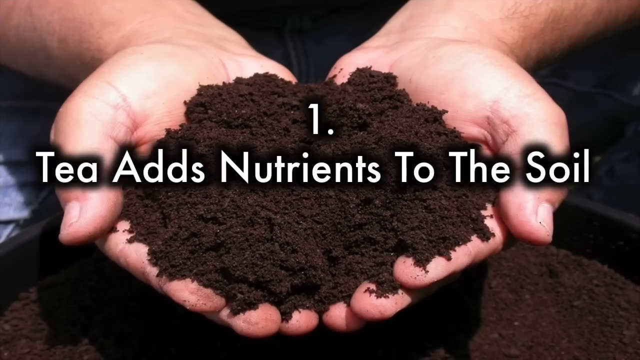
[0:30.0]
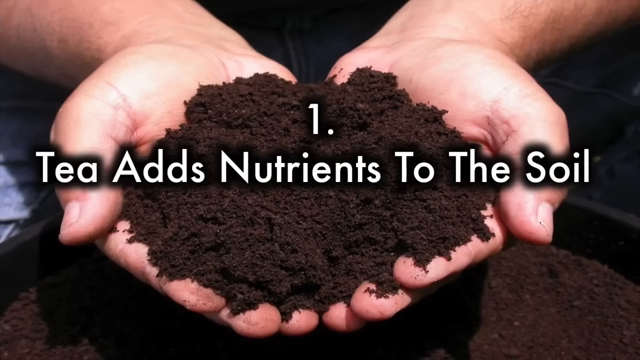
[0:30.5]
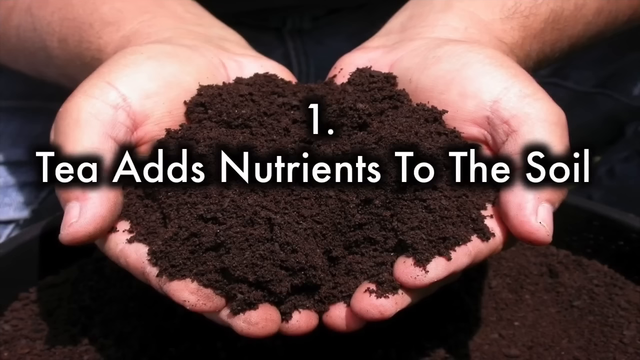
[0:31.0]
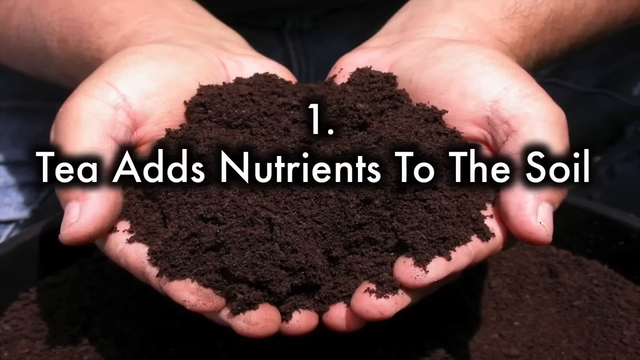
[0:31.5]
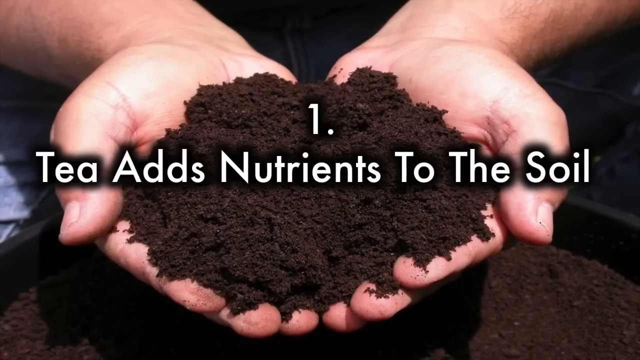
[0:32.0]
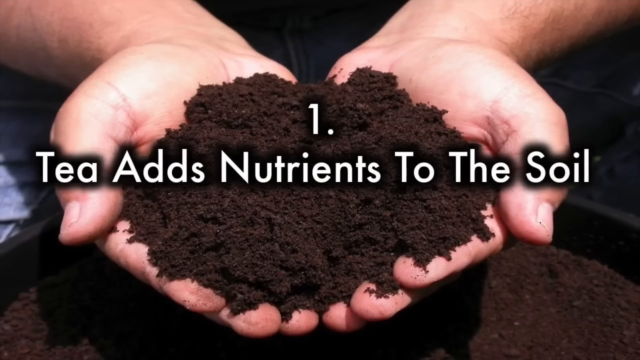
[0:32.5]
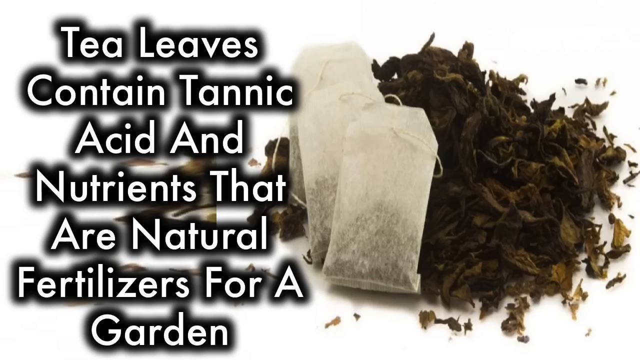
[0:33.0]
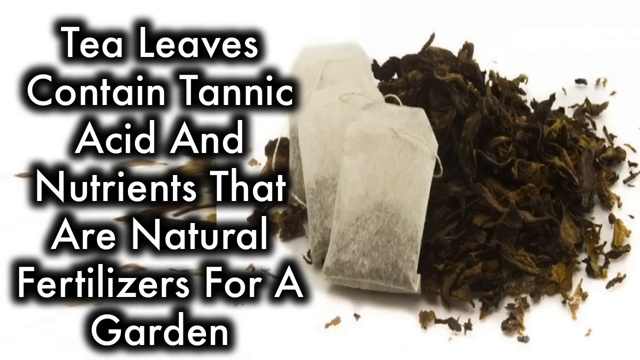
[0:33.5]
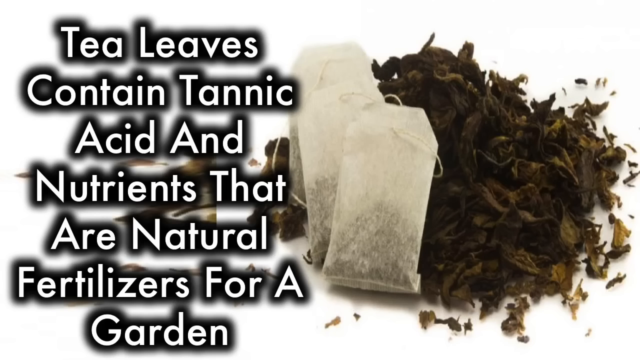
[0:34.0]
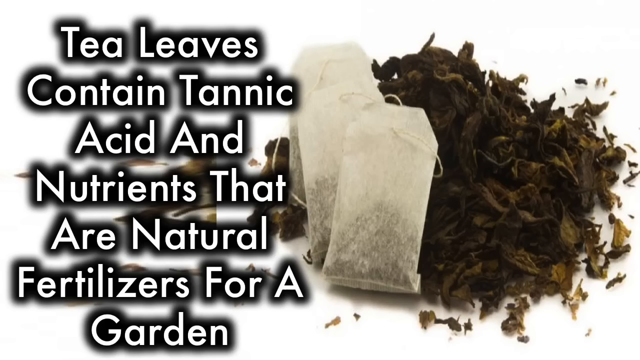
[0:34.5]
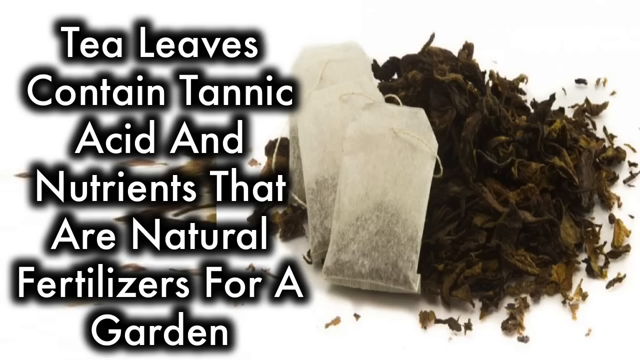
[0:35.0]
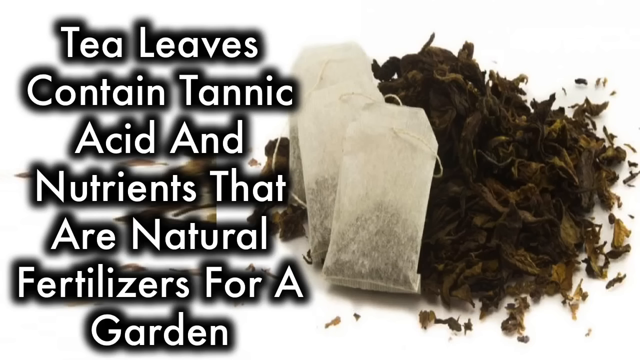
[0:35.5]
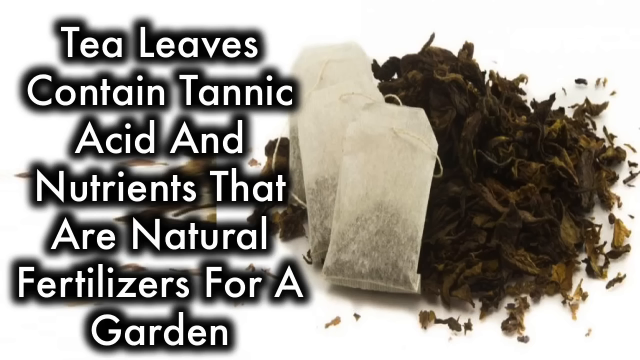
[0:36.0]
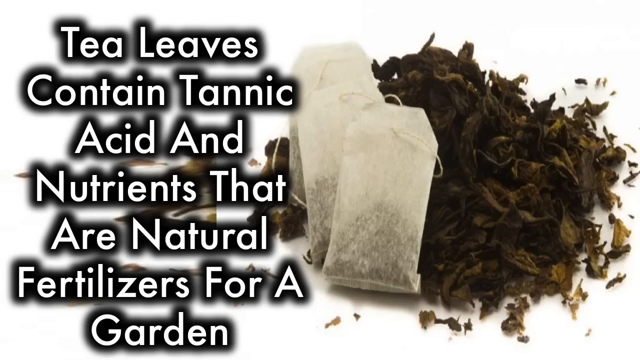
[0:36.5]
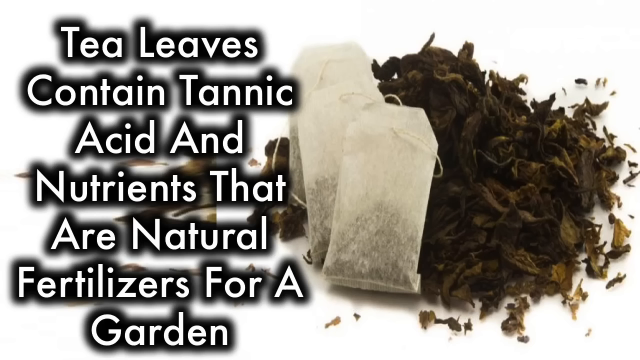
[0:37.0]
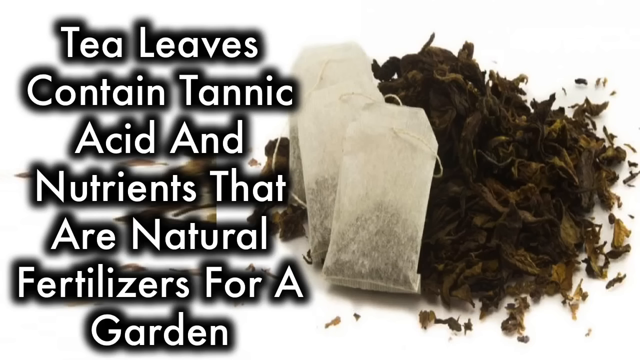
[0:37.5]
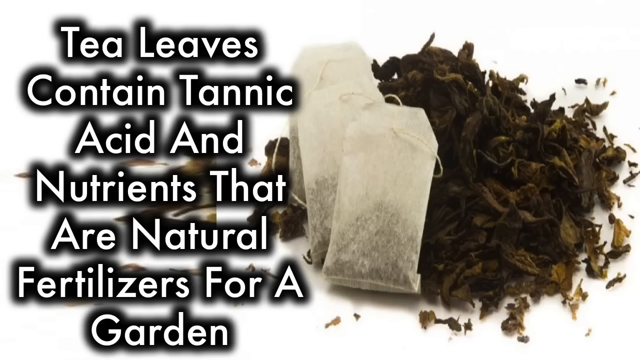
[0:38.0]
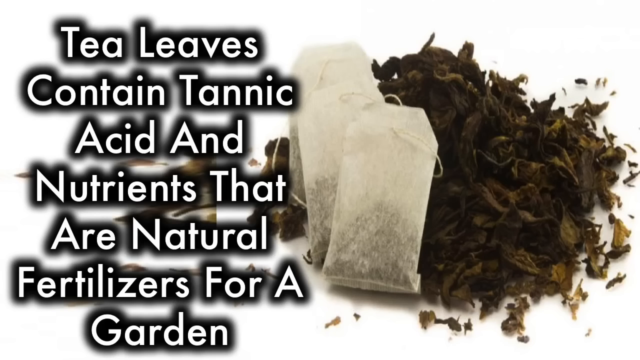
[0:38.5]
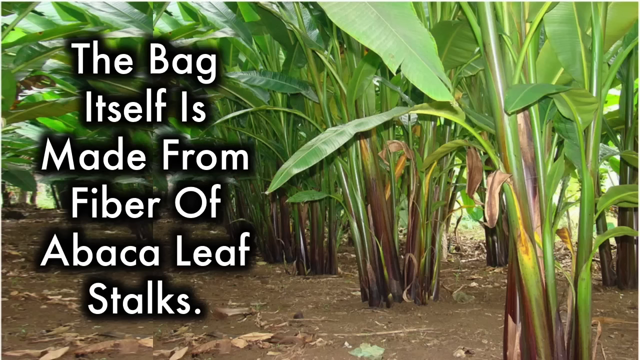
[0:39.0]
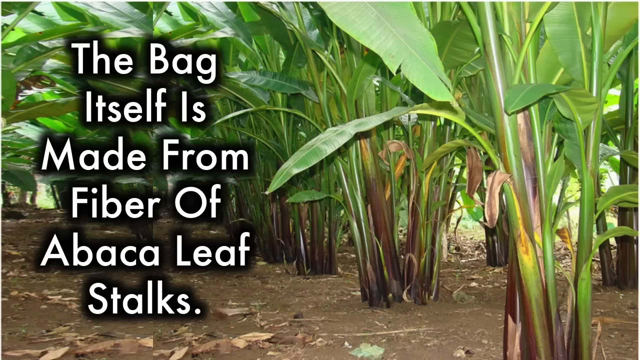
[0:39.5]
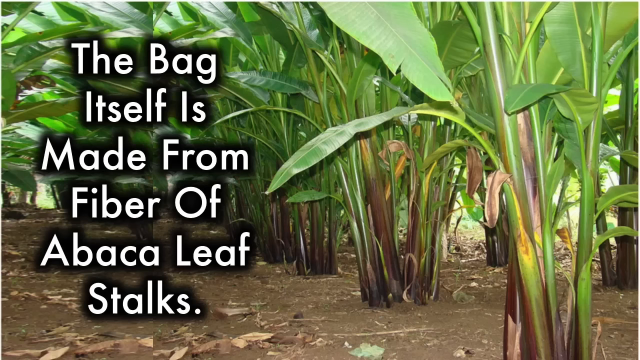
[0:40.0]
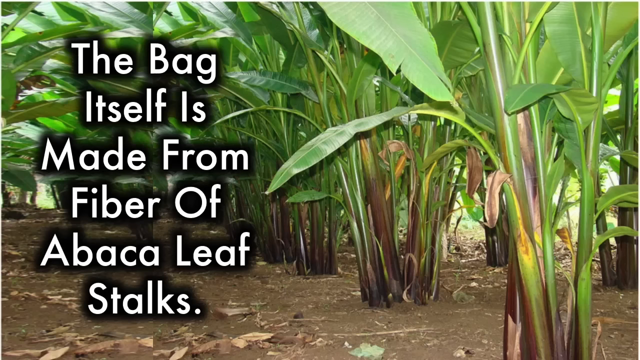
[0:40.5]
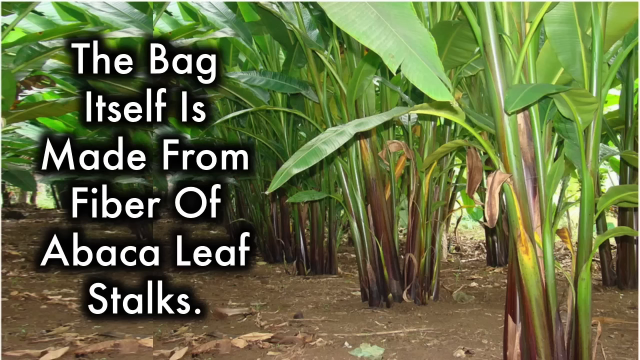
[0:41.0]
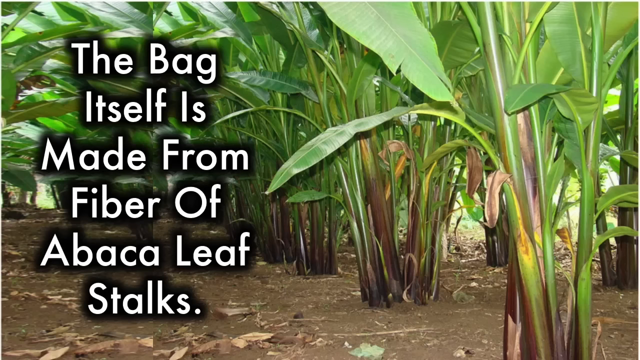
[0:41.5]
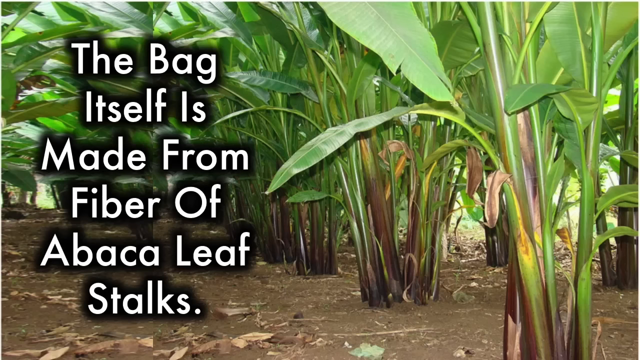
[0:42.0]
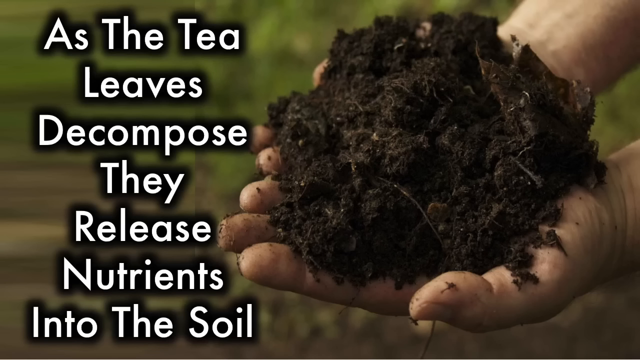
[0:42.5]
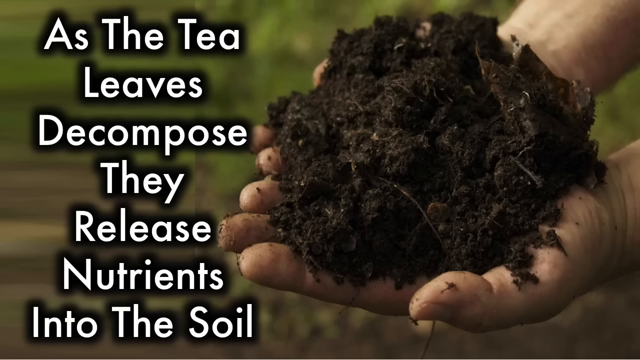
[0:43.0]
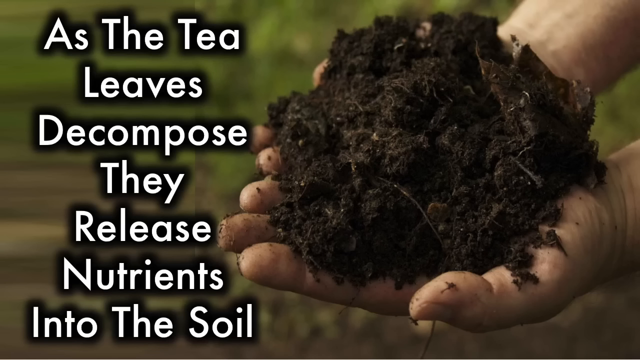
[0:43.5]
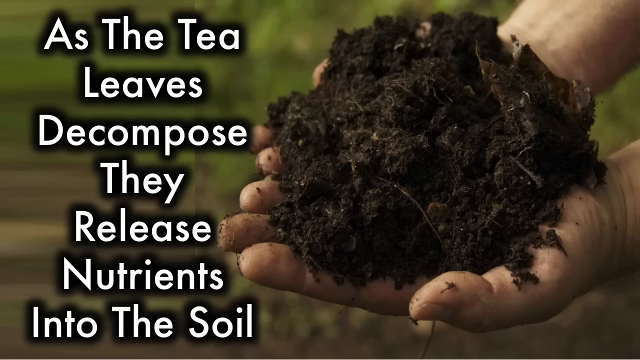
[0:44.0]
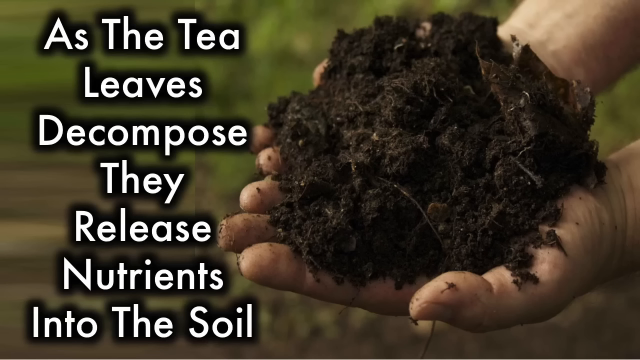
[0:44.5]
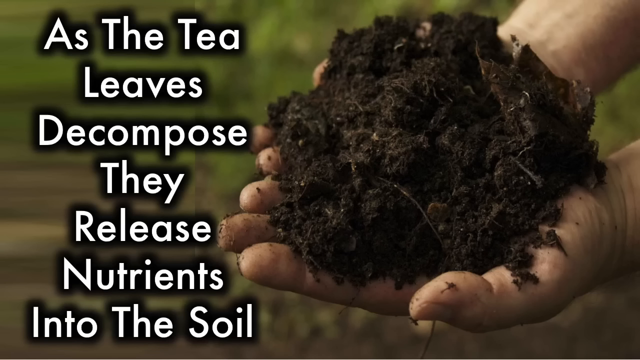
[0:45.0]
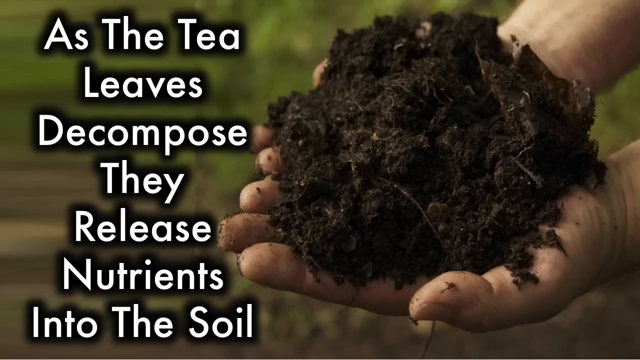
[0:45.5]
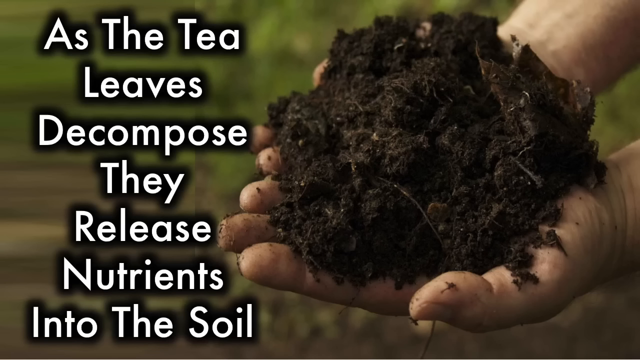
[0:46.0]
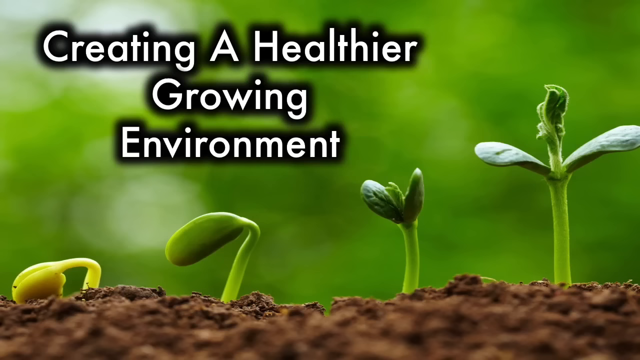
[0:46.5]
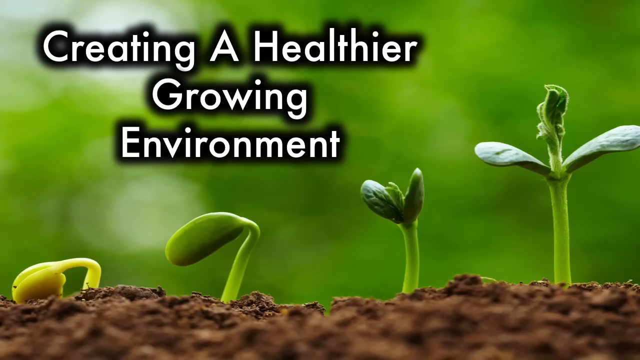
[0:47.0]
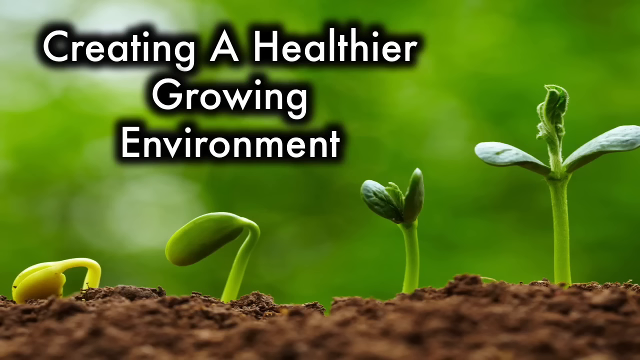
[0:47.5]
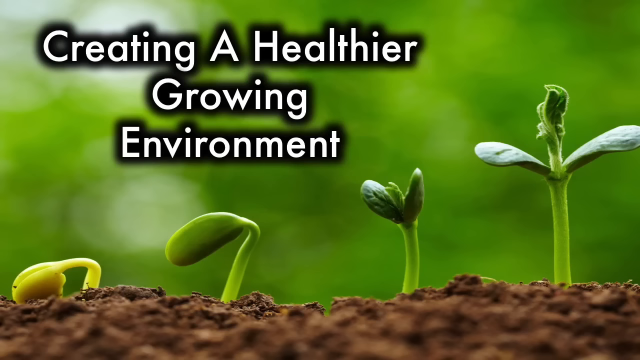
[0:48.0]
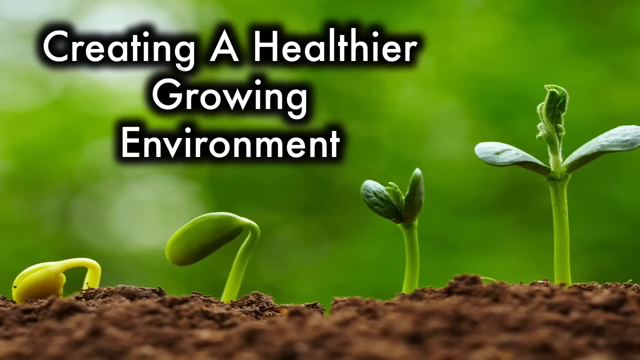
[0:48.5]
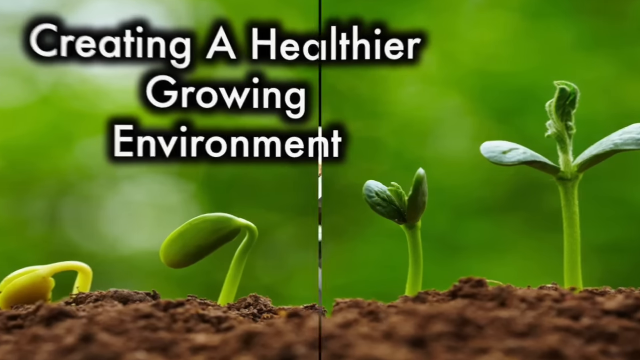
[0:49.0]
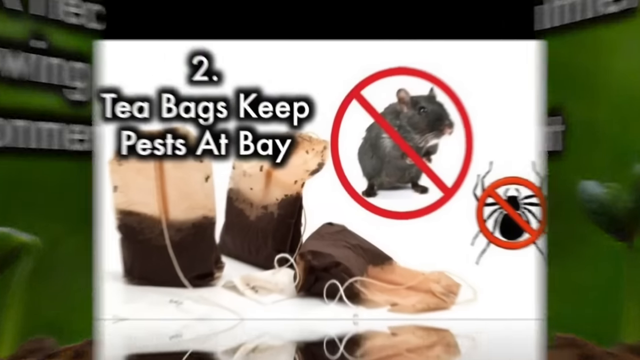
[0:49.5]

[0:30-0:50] The first reason appears on screen: "Tea adds nutrients to the soil." The text continues: "Tea leaves contain tannic acid and nutrients that are natural fertilizers for a garden," followed by a line ending "as the tea bag decomposes, creating a healthier growing environment." Healthy growing plants are shown. The information also notes that the bag itself is made from fiber or abaca leaf stalks, and that as the leaves decompose they release nutrients into the soil.